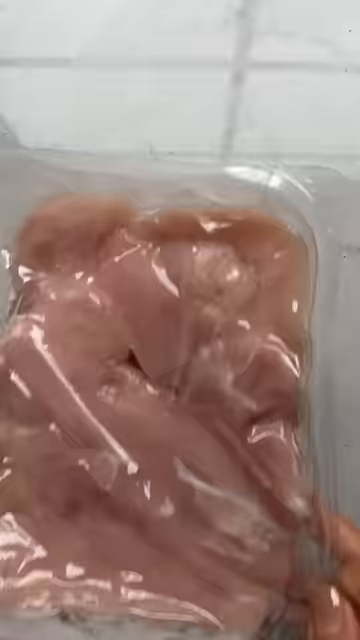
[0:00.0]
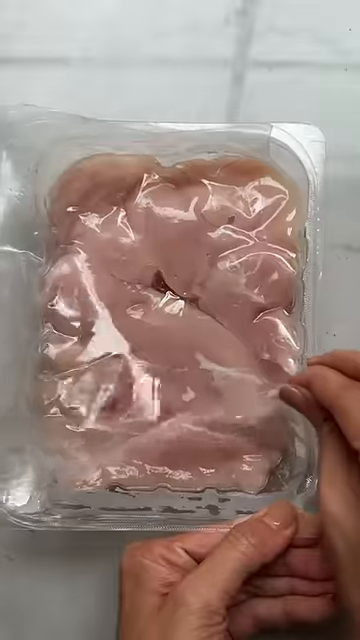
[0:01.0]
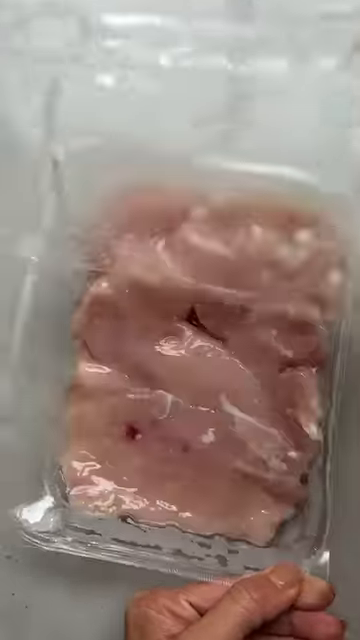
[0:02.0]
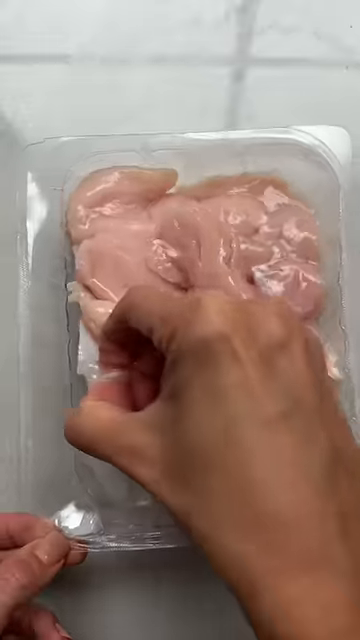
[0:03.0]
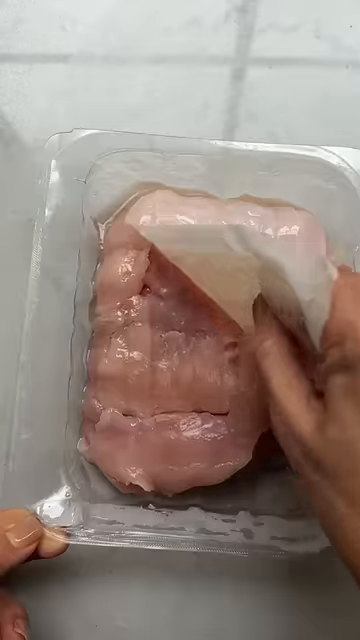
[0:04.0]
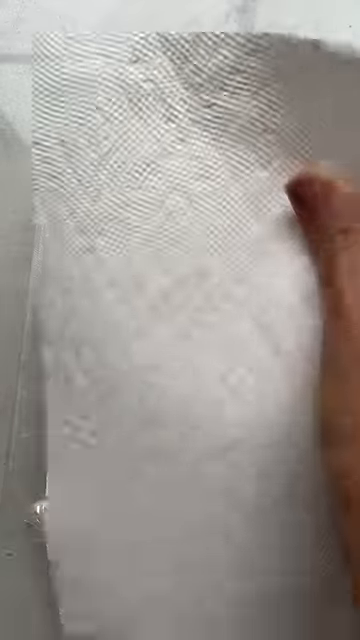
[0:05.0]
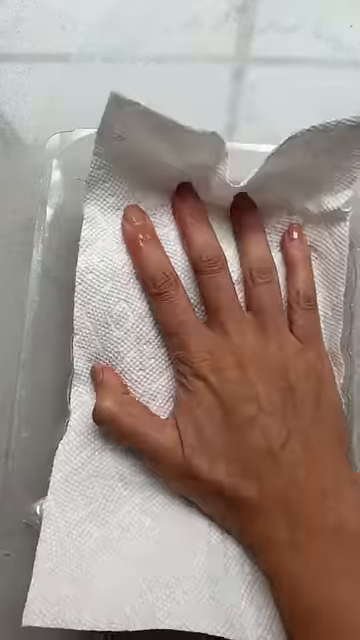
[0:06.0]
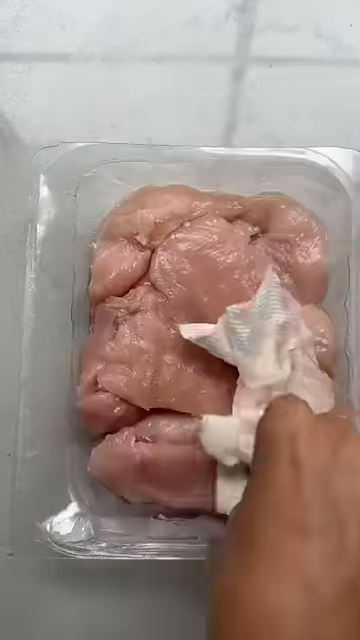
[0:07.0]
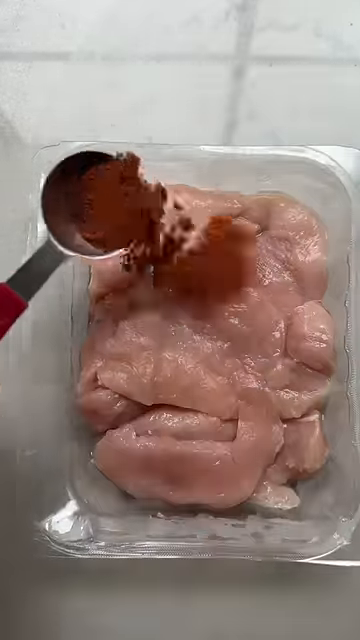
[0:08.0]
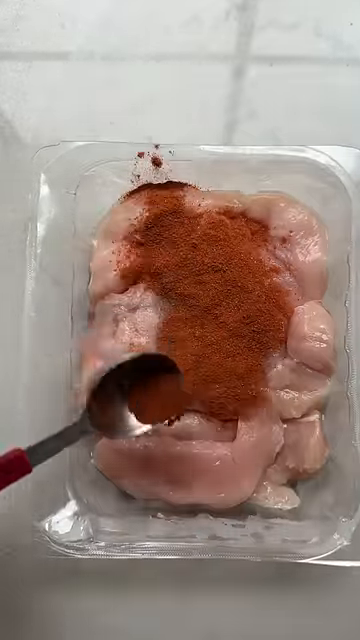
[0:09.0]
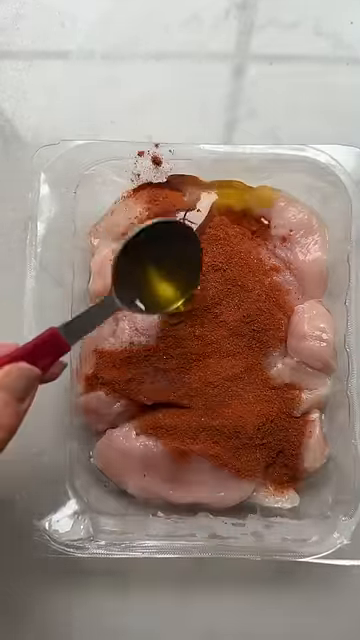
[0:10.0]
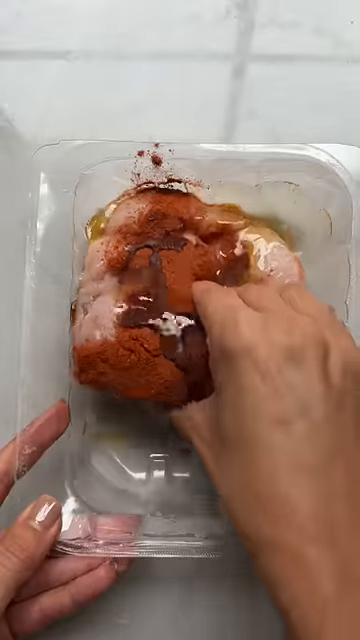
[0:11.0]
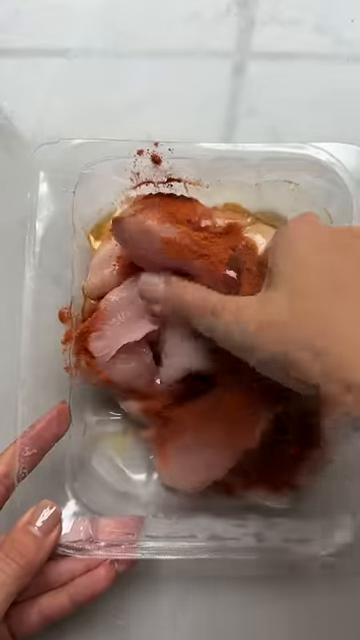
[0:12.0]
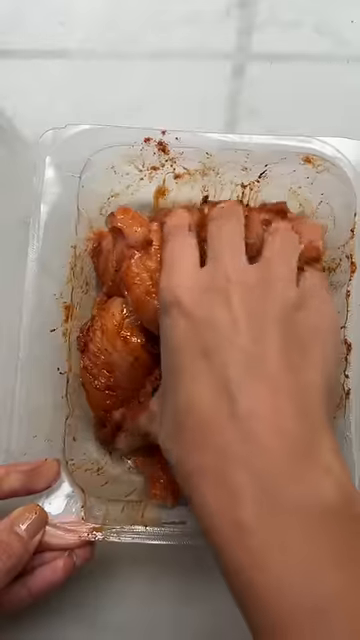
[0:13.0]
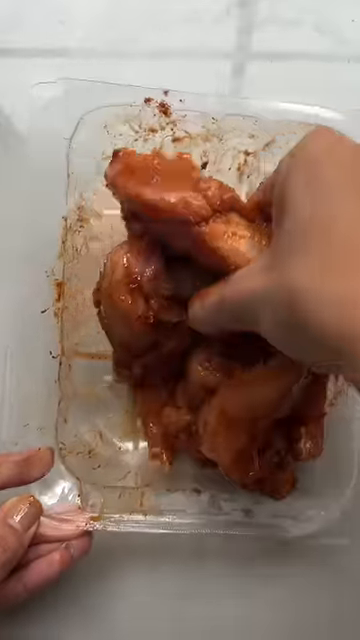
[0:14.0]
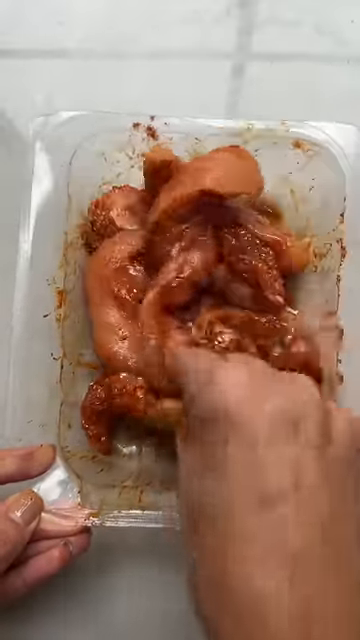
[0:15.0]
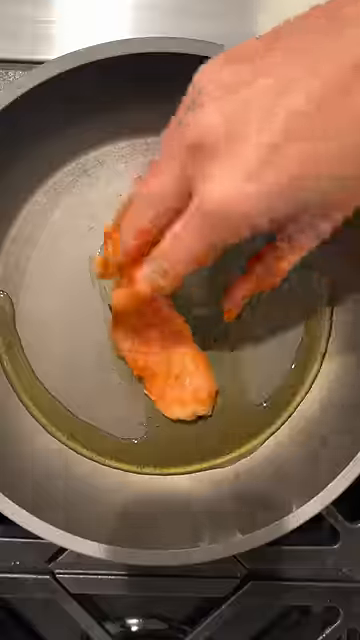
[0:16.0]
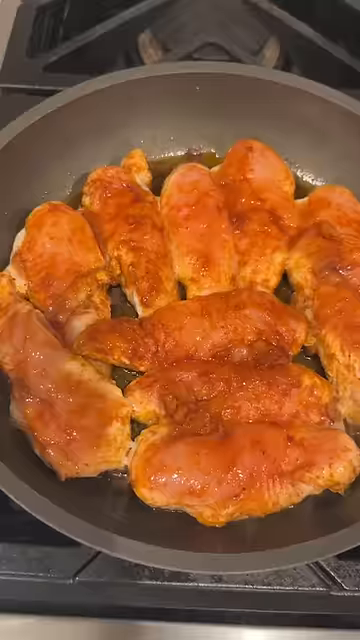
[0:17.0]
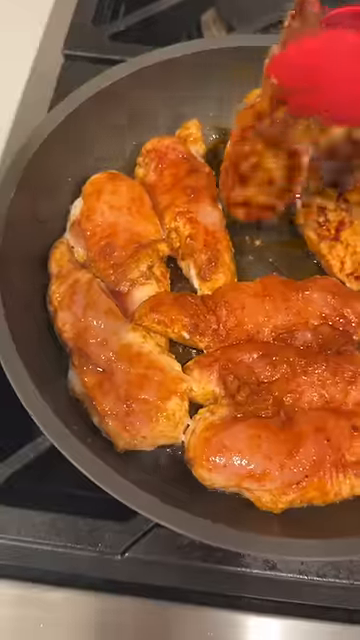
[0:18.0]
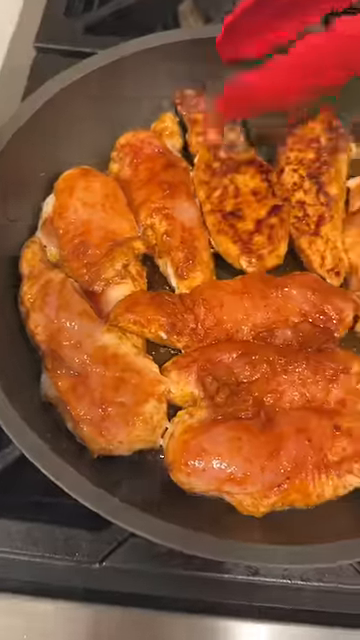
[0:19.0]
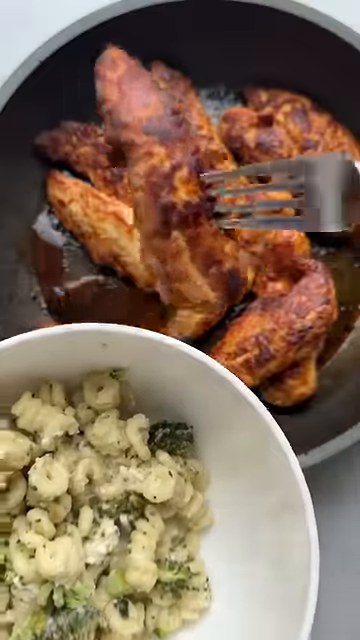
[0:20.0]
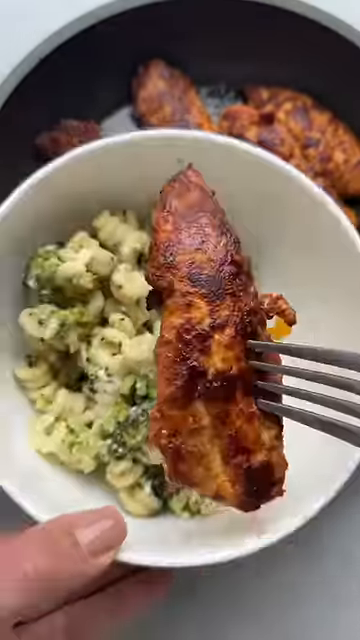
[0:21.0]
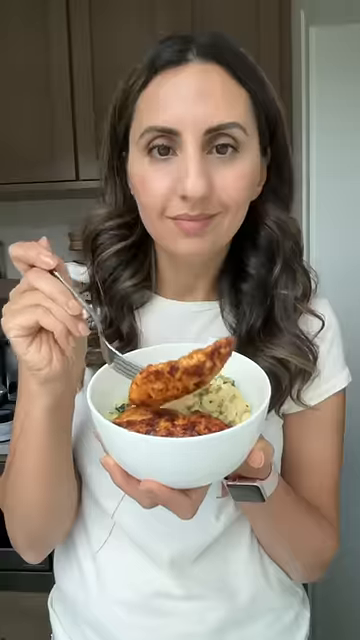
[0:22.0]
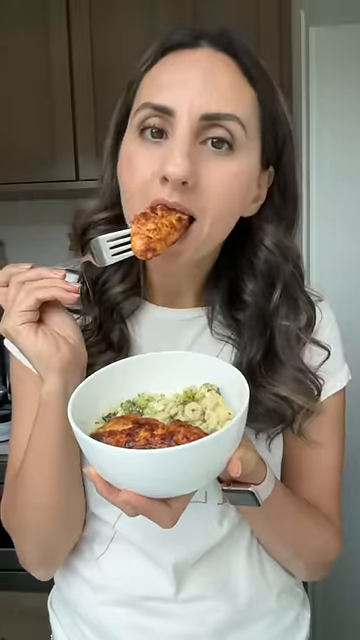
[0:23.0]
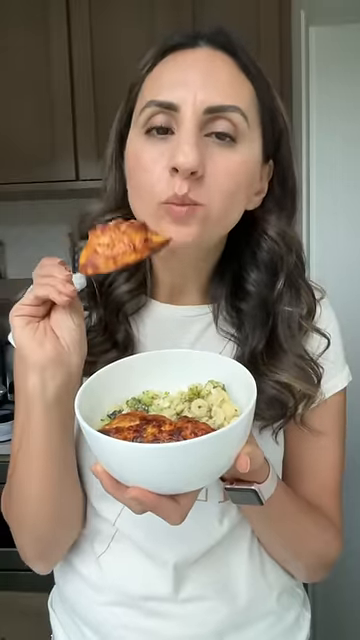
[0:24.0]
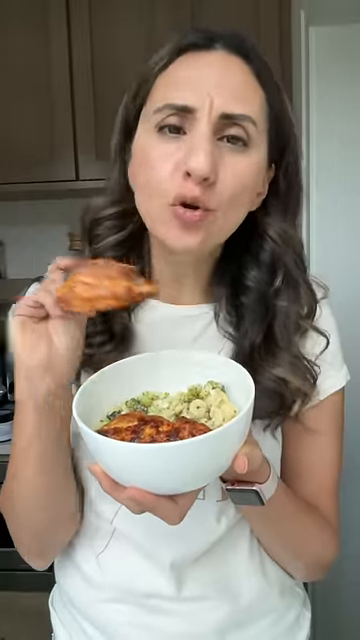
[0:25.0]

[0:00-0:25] The video opens on a meal prep, showing what look like seasoned pieces of chicken, possibly chicken breast. The prep then begins: someone opens a pack of chicken breasts. The person's hand uses a white paper towel to dab the chicken breasts, apparently to wipe off excess moisture. The person's left hand holds a spoon and pours red powdered seasoning, possibly paprika, liberally all over the chicken. The person's right hand then mixes the seasoning all over the chicken breast cutlets. Next, a frying pan with oil in it is on a stove, and the person uses a pair of red tongs to lay the chicken out in the pan. The chicken breast cutlets are then fully cooked, and the person's hands scoop some of the chicken into a bowl that already has other food in it. Finally, the face of the person making the meal prep appears: a woman, who takes a bite of the chicken and seems to be saying it is absolutely good.